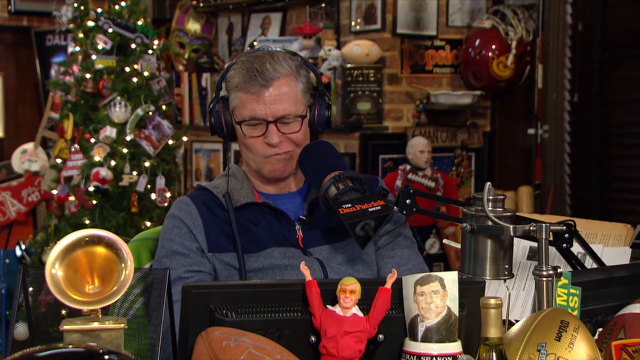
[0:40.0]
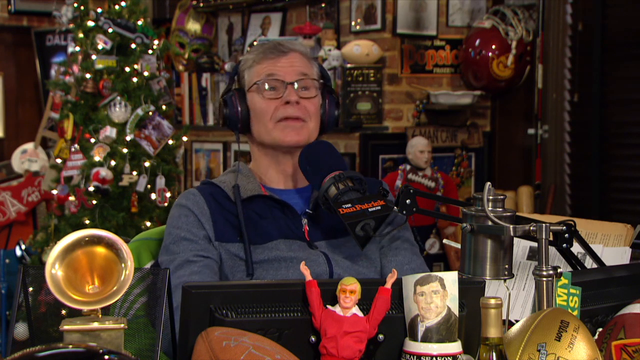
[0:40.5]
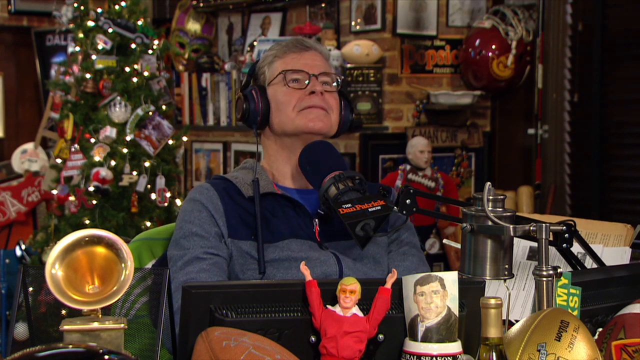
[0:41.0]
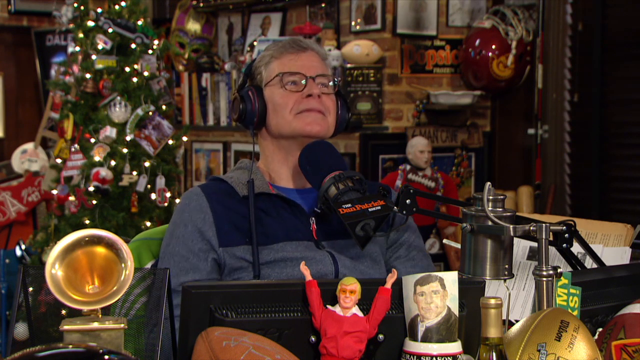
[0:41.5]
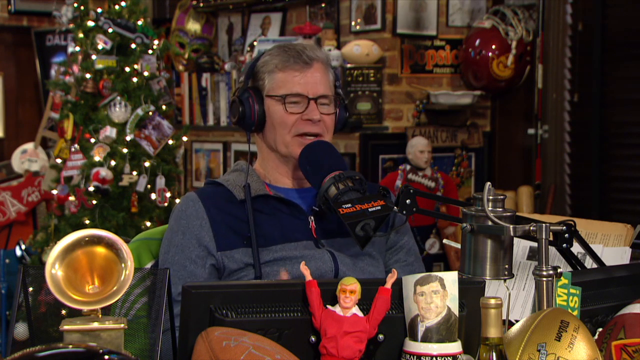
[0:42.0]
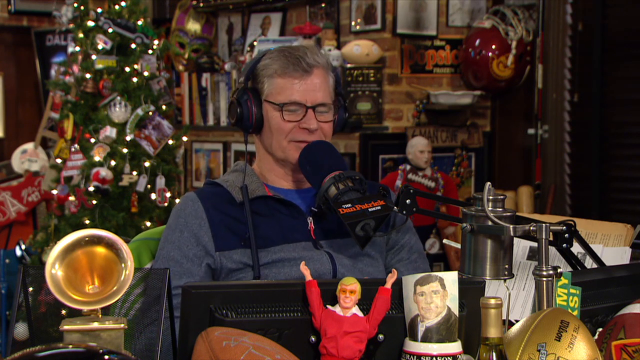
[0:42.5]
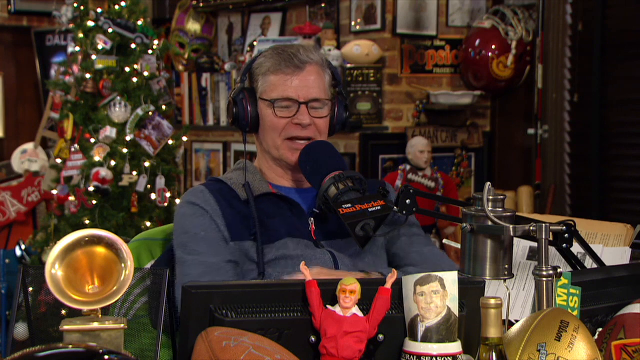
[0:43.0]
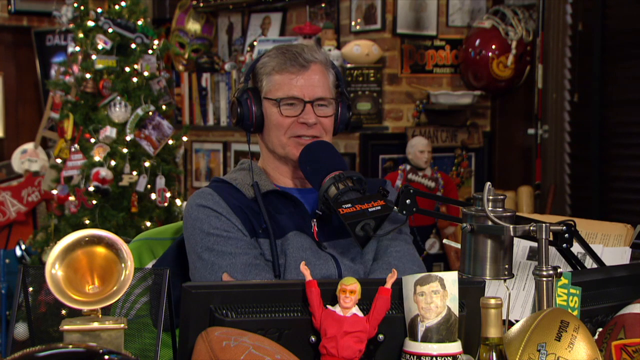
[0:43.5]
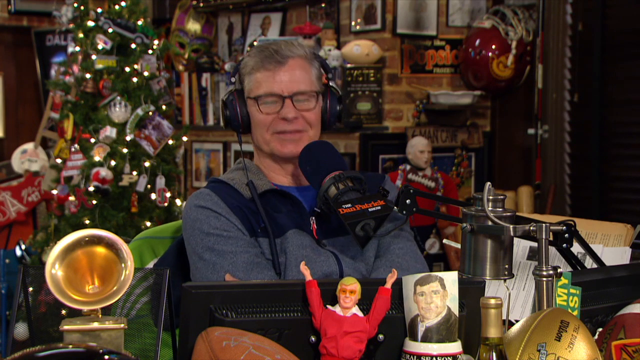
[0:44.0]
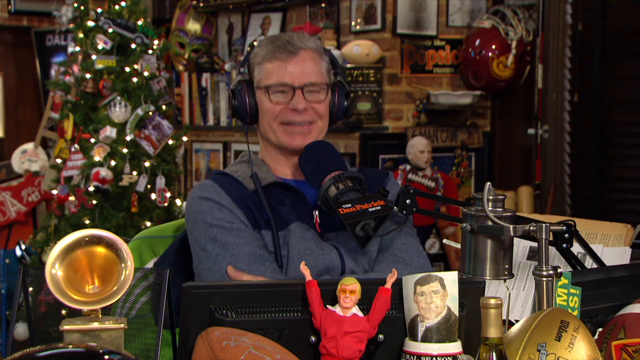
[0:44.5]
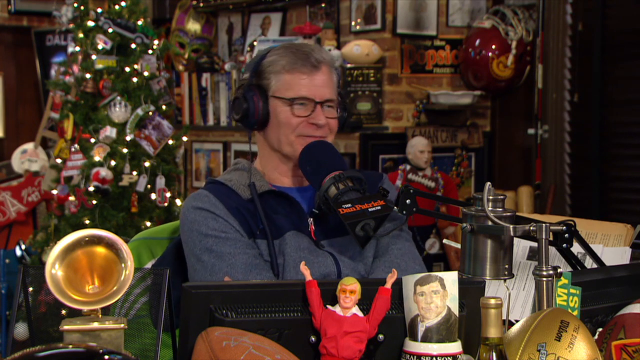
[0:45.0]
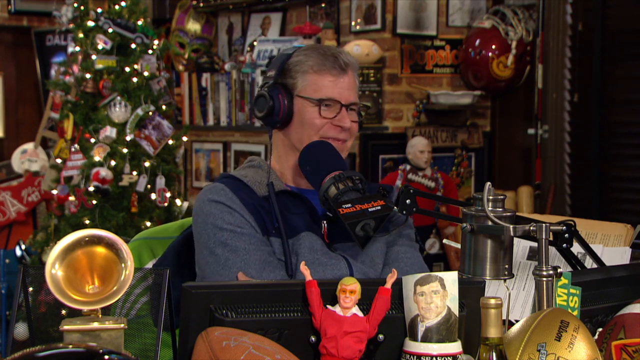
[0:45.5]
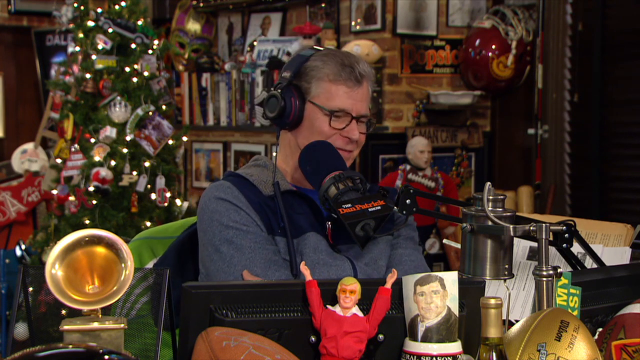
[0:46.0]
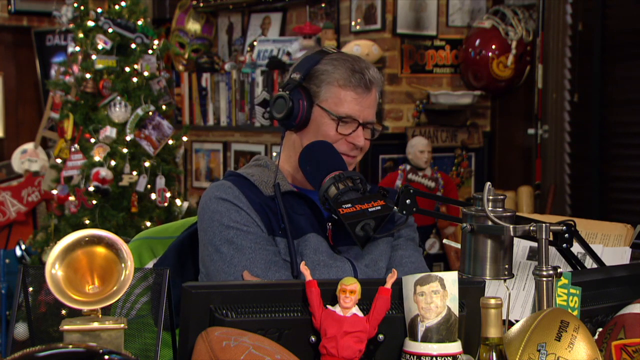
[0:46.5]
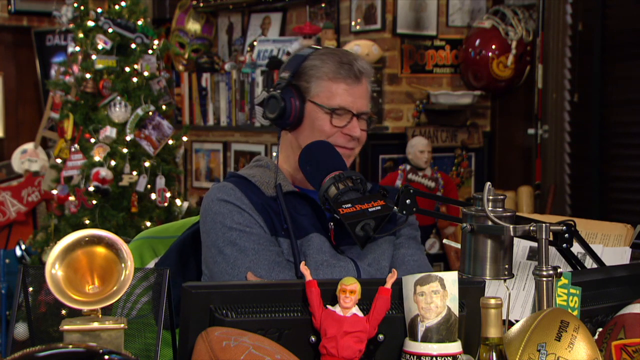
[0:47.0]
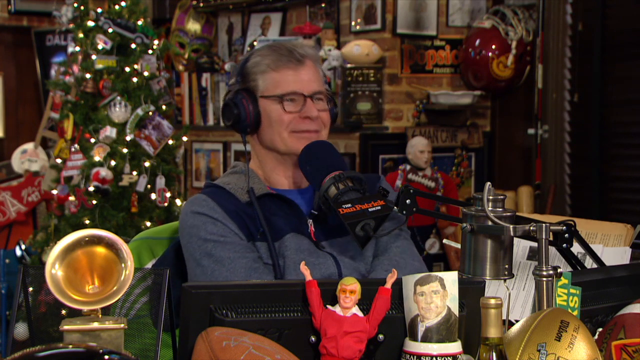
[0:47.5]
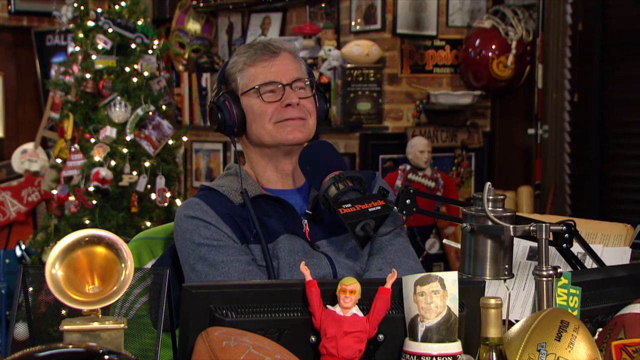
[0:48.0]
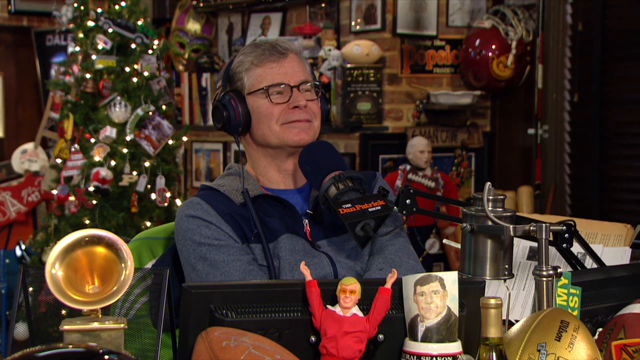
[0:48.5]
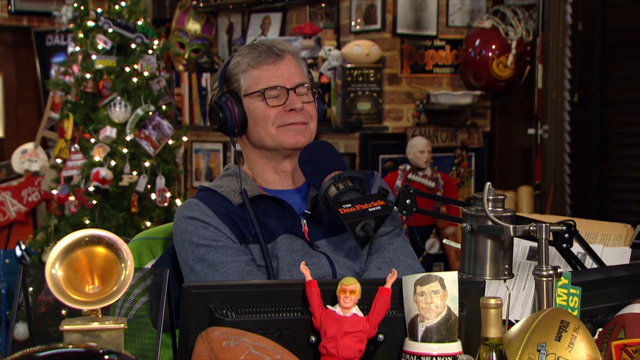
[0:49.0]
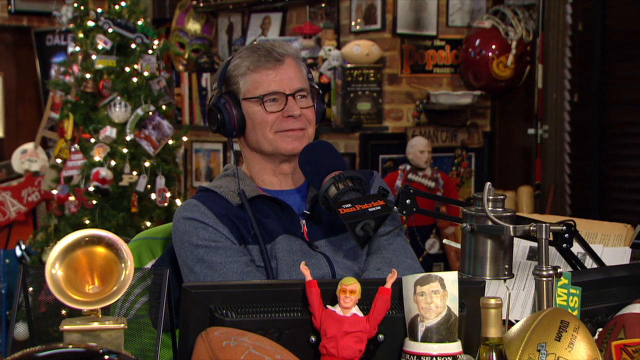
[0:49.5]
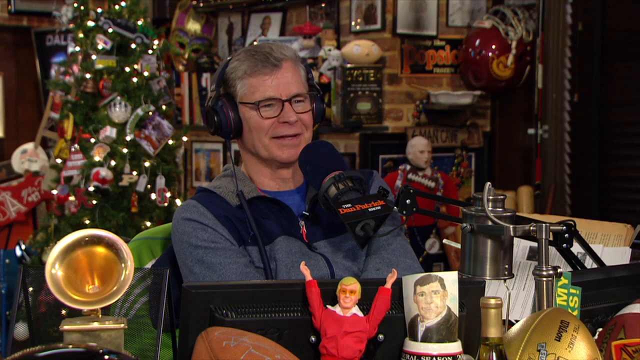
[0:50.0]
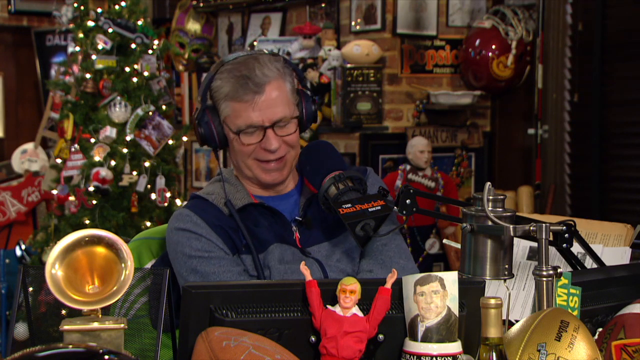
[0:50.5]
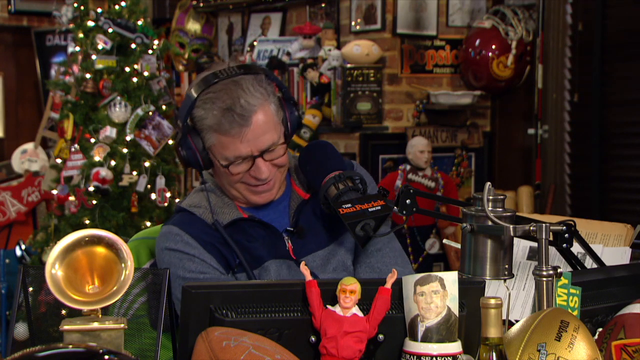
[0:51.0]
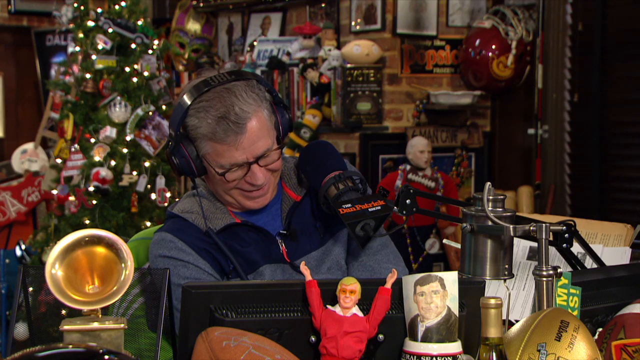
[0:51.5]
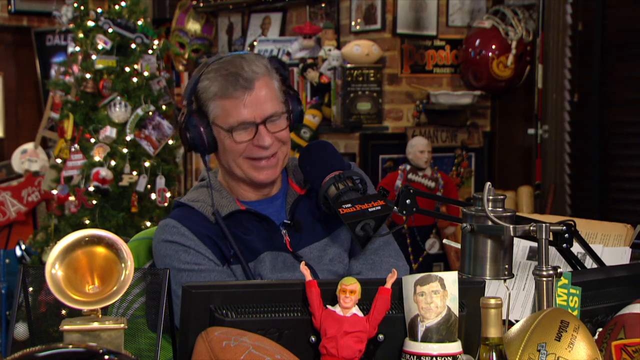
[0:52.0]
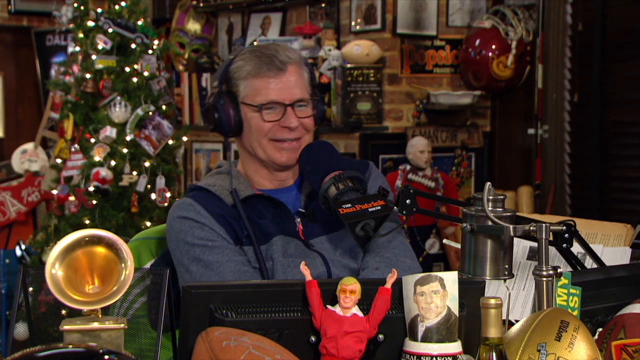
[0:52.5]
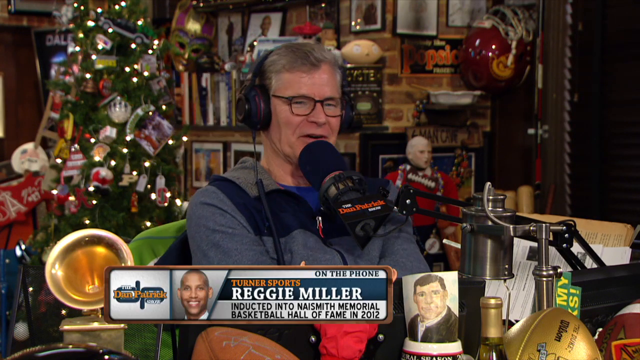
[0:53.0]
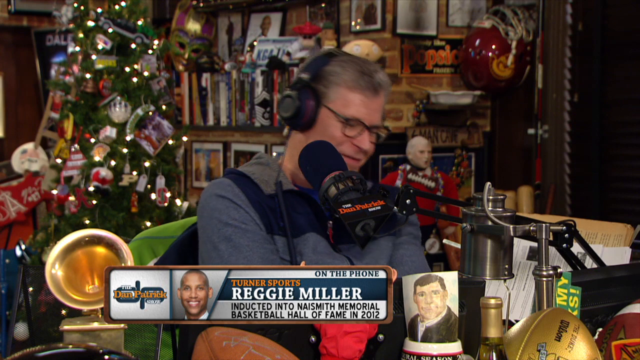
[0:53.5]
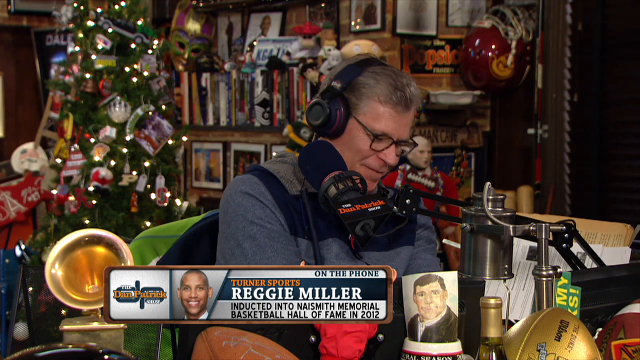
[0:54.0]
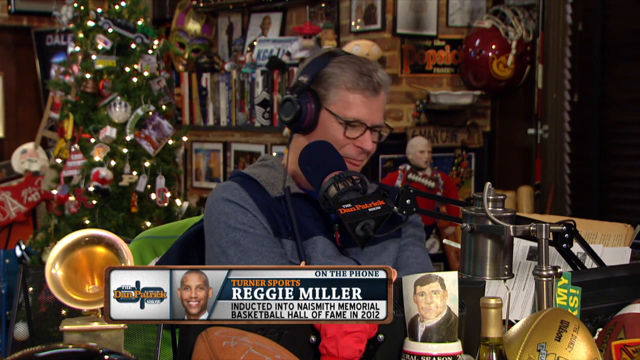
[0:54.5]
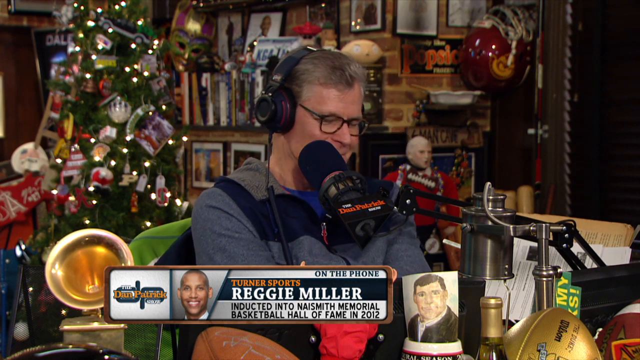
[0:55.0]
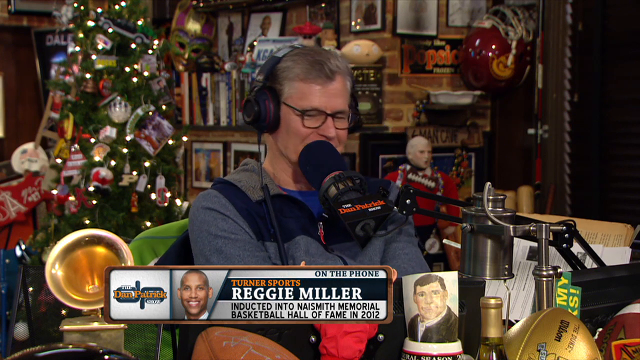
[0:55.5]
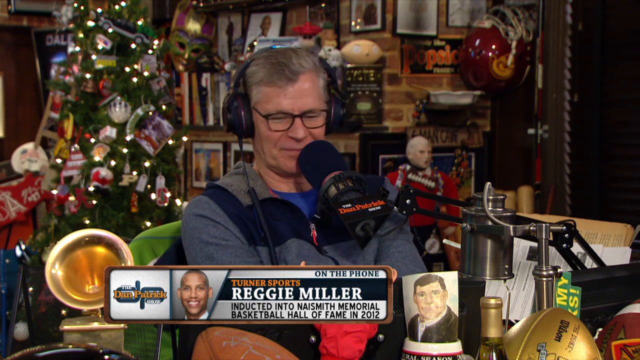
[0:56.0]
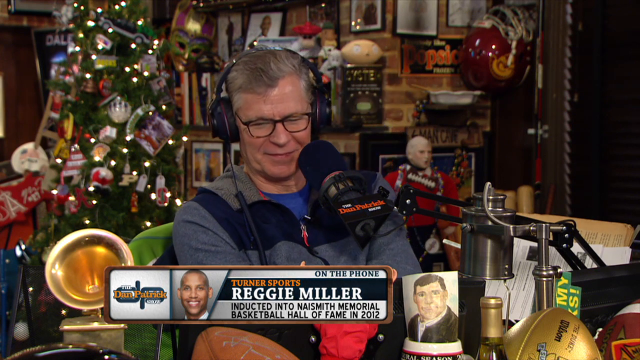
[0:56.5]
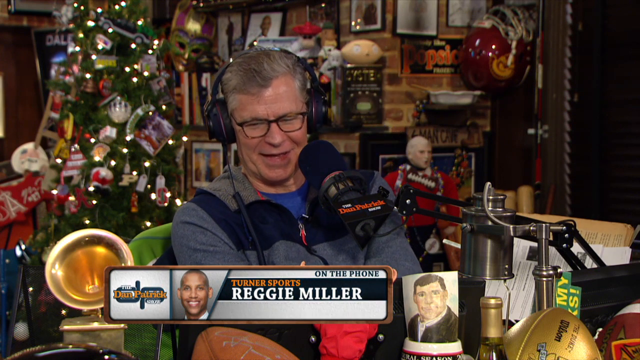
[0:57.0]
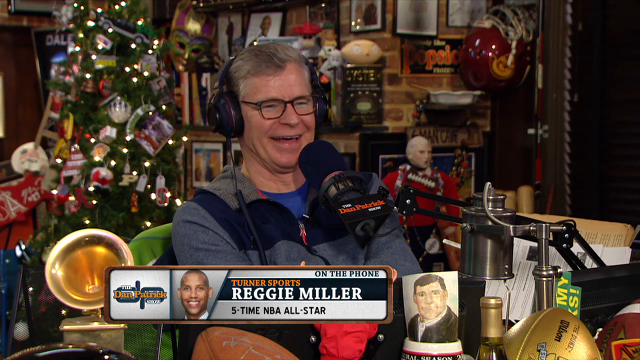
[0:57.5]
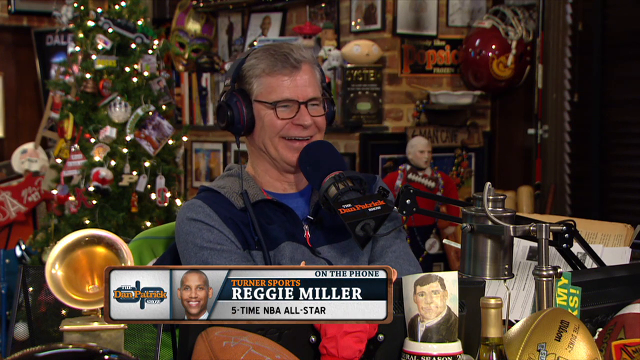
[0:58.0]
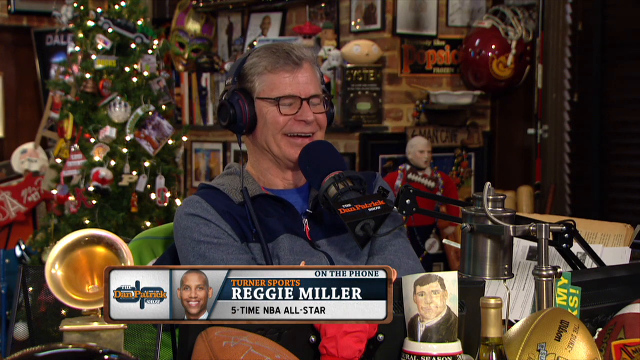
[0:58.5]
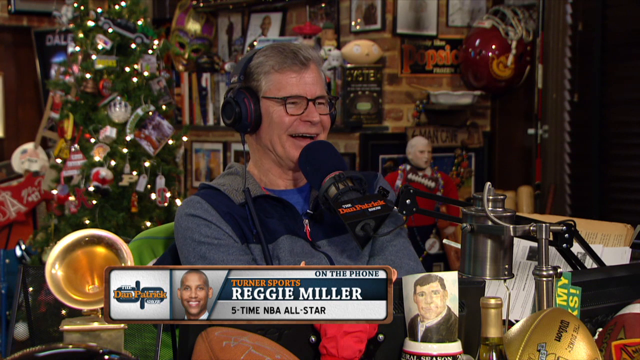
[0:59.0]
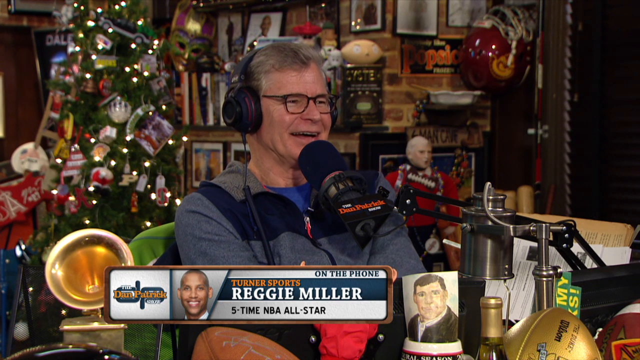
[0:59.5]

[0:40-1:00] Dan Patrick pulls his left cheek muscle slightly to the left. He looks up again, tilting his head back slightly as he raises his eyebrows, shakes his head, grabs the outer parts of his arms, and lifts himself off the seat for a moment. He raises his eyebrows a lot while listening, looking up and to the left, and laughs again. A graphic at the bottom shows Reggie Miller with "on the phone" and a picture of him smiling to the left, along with the Dan Patrick Show name, with "Patrick" in yellow; it apparently notes he was inducted into the Naismith Memorial Hall of Fame in 2012. Dan Patrick keeps laughing, showing the top row of his teeth, and speaks a little, having mostly listened and laughed. There appears to be a stainless steel lamp, apparently behind the Dan Patrick Show, on an arm-like bracket that comes out and swivels. A USC-looking helmet, maroon with the yellow Trojan on the side, is in the back. A row of framed pictures hangs high up on the brick wall, and there is what looks like a gold and green Mardi Gras mask.